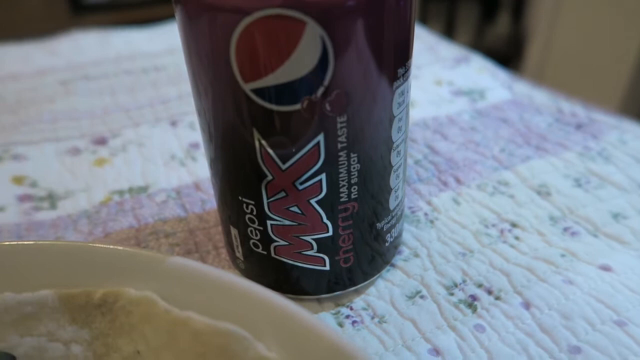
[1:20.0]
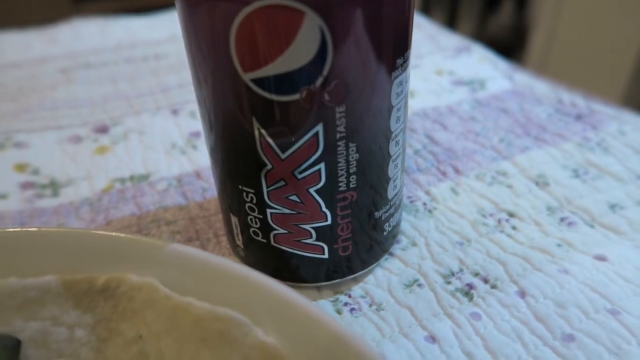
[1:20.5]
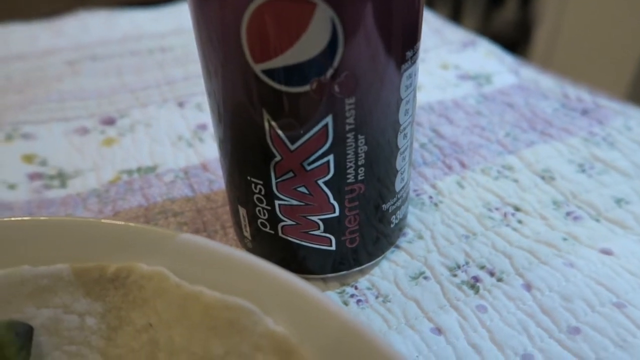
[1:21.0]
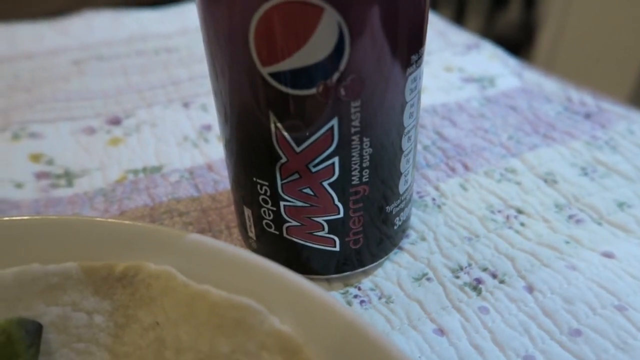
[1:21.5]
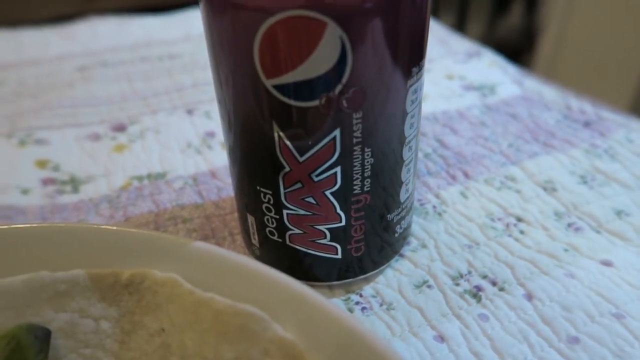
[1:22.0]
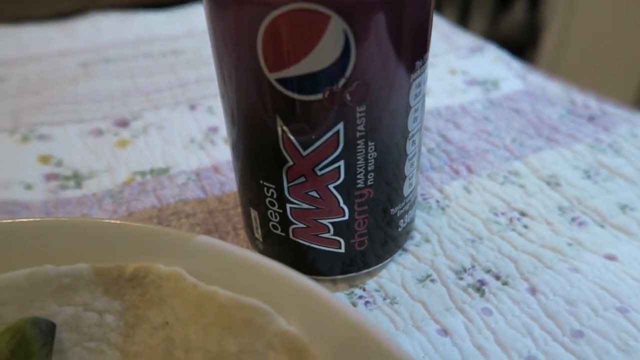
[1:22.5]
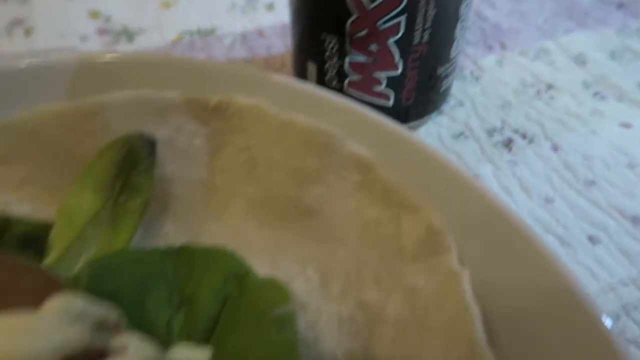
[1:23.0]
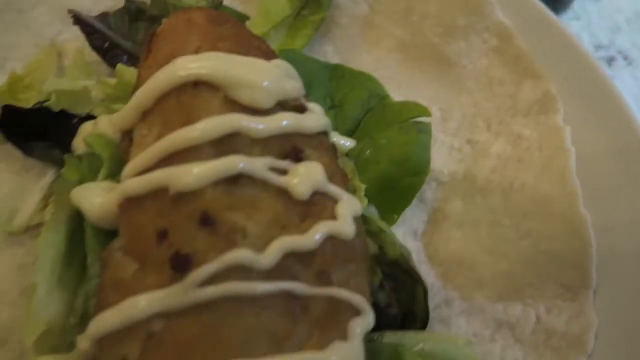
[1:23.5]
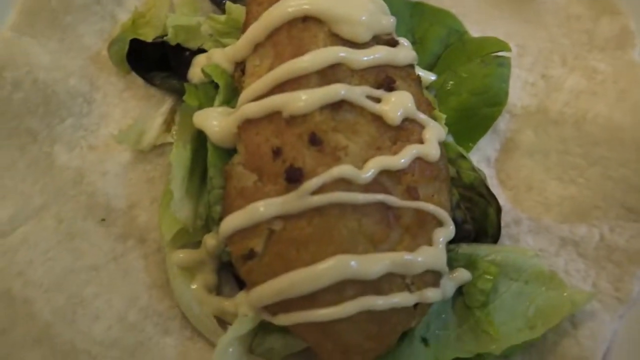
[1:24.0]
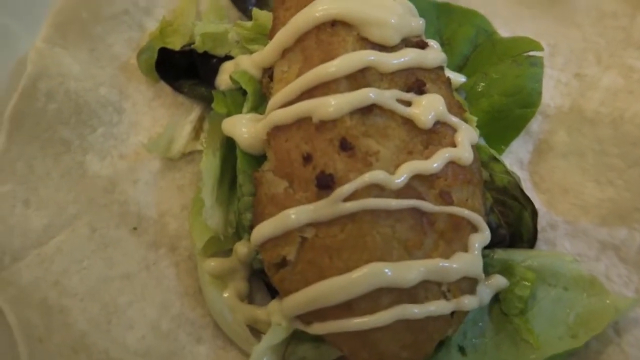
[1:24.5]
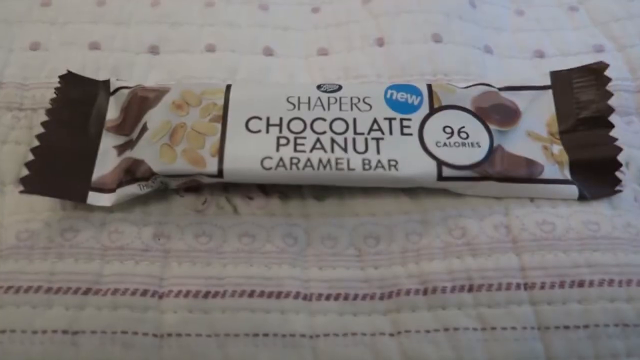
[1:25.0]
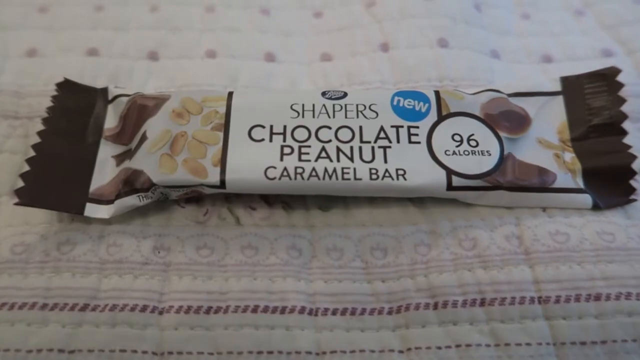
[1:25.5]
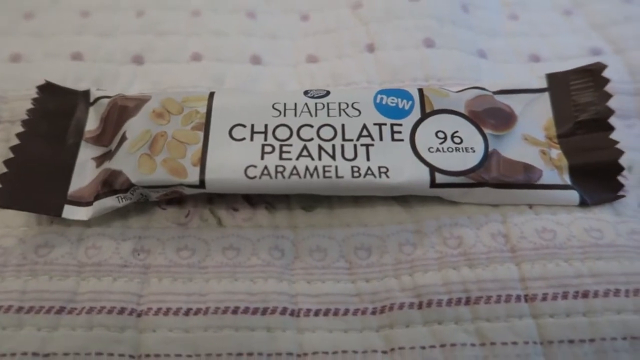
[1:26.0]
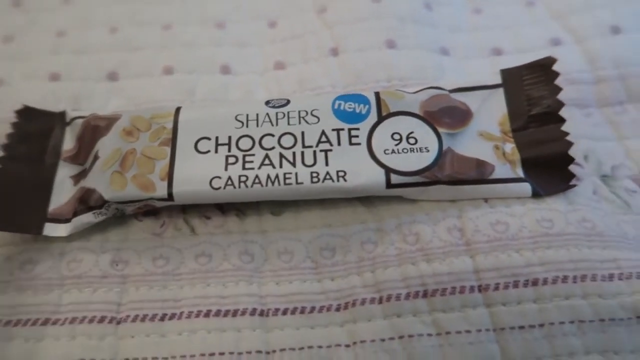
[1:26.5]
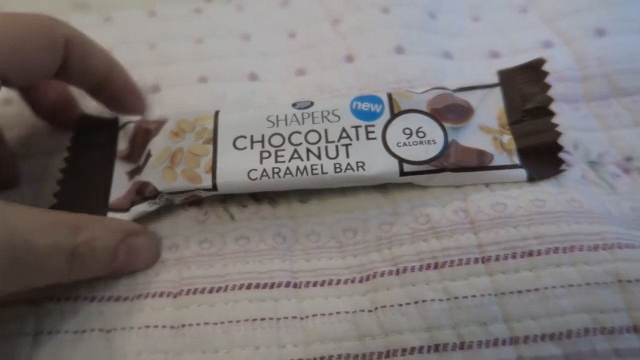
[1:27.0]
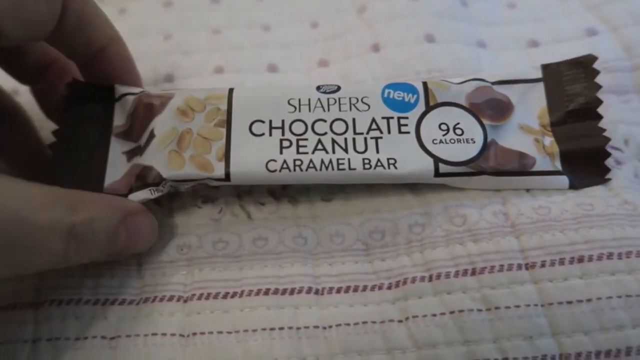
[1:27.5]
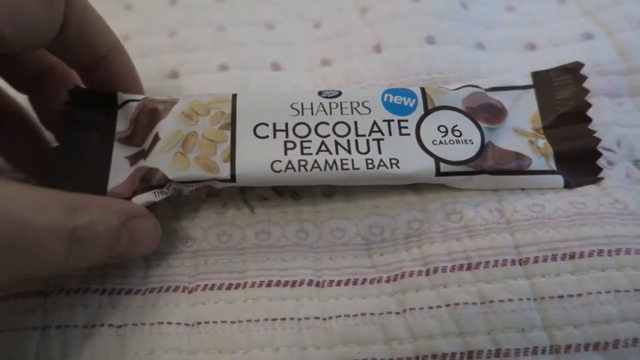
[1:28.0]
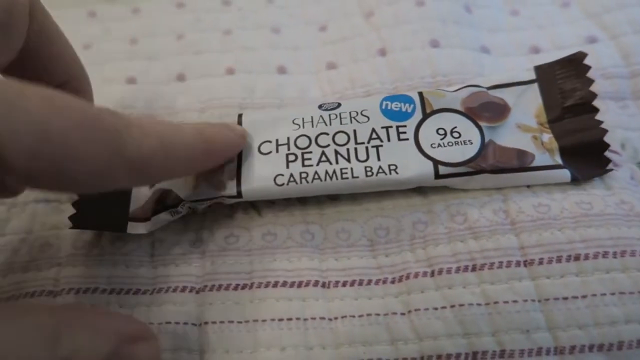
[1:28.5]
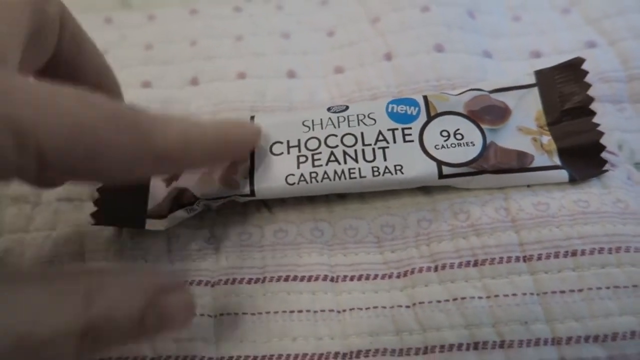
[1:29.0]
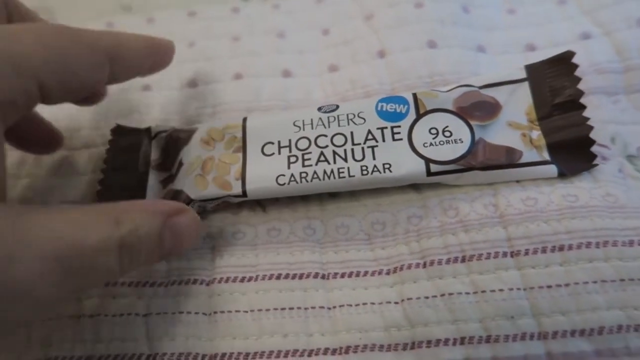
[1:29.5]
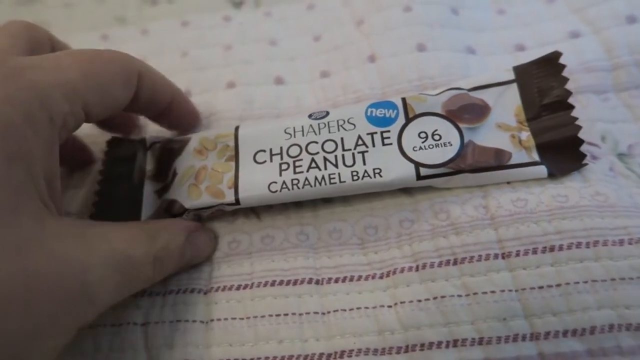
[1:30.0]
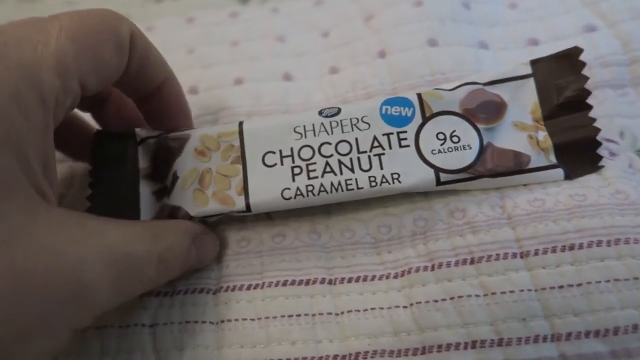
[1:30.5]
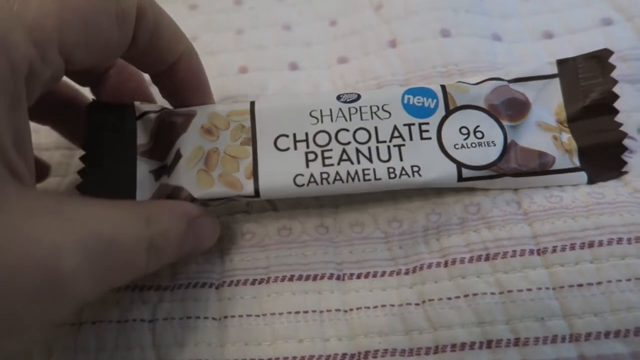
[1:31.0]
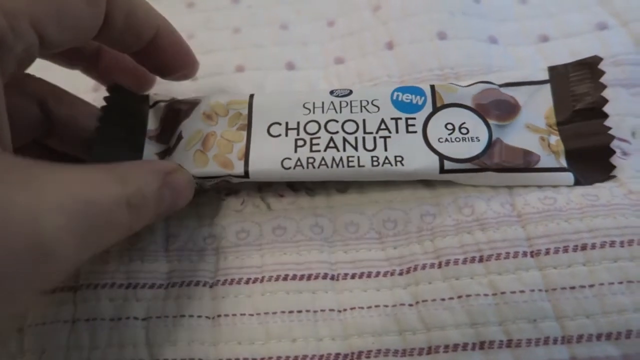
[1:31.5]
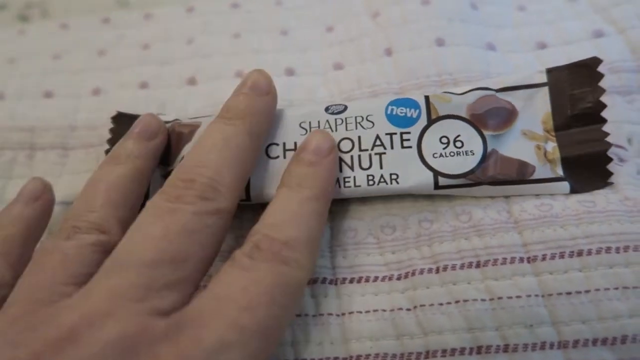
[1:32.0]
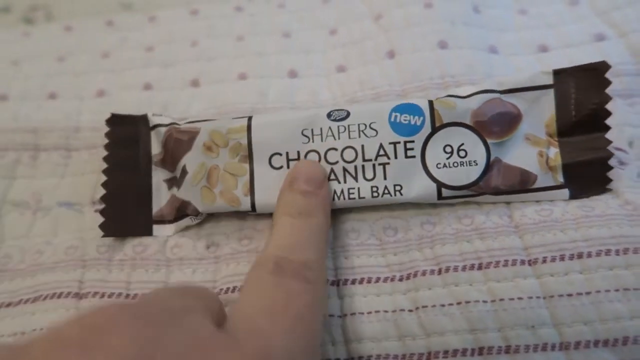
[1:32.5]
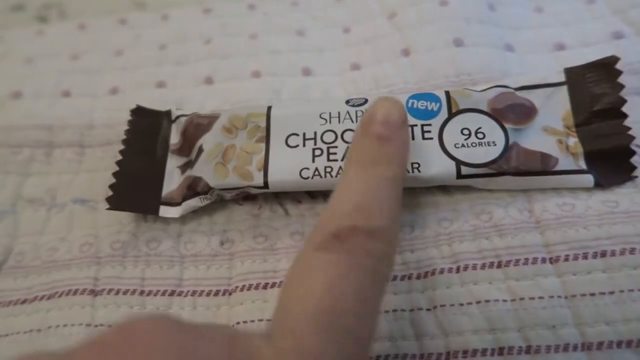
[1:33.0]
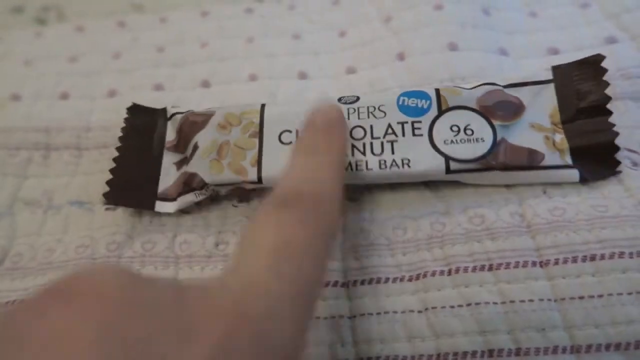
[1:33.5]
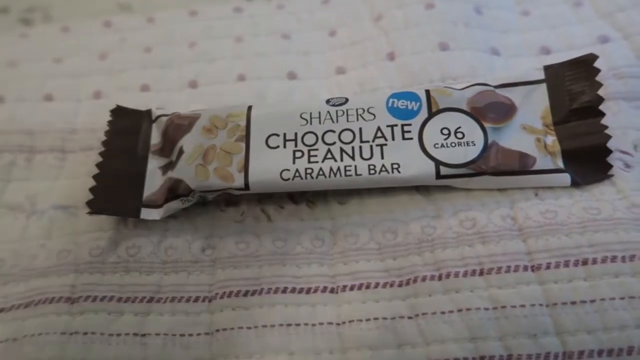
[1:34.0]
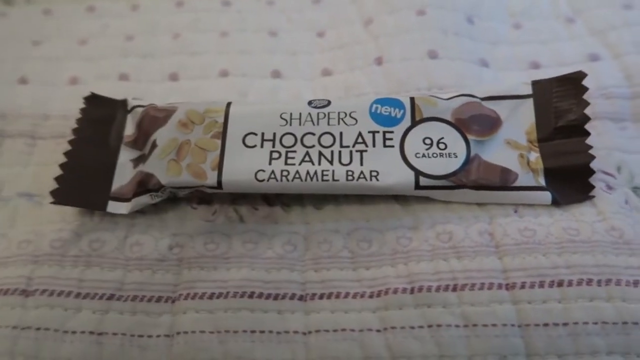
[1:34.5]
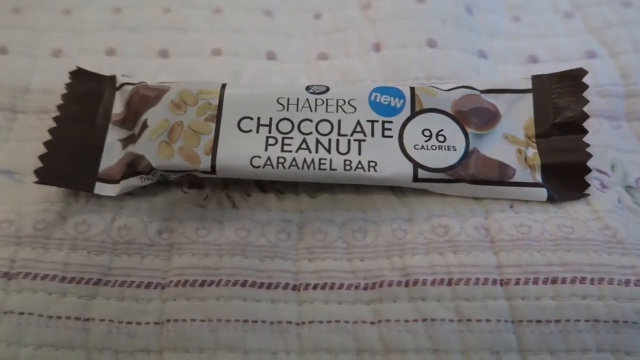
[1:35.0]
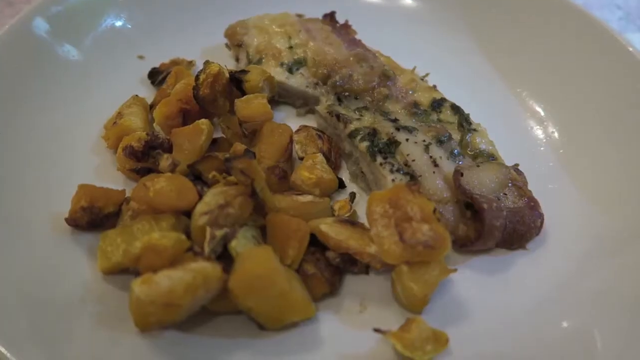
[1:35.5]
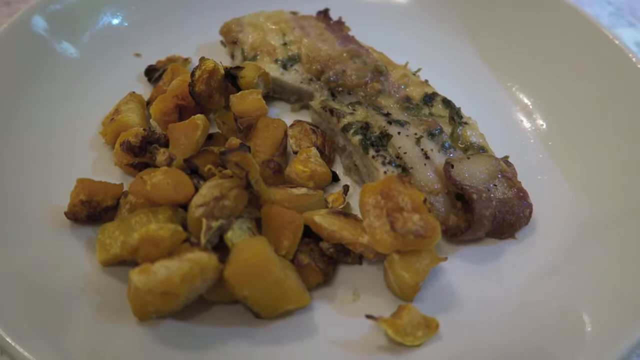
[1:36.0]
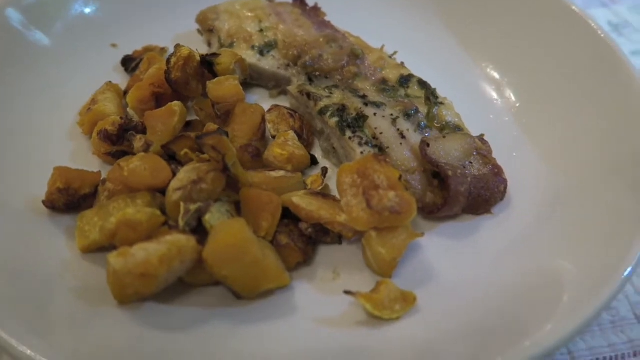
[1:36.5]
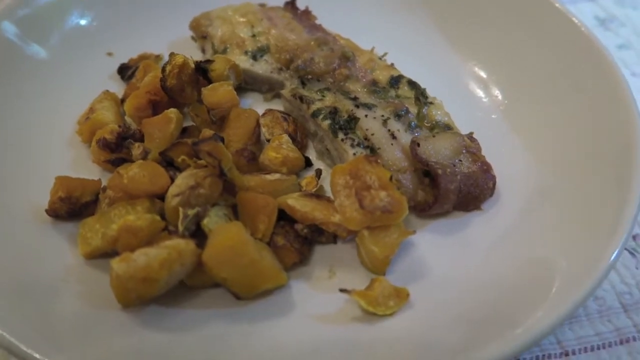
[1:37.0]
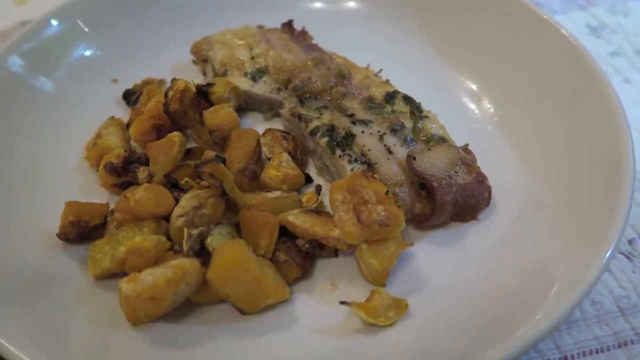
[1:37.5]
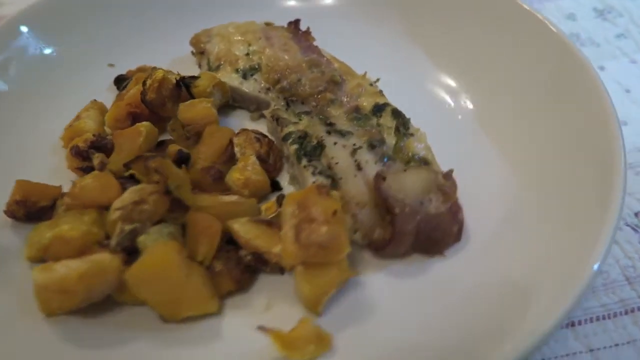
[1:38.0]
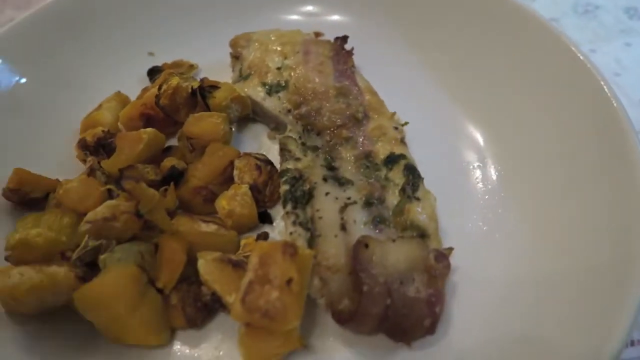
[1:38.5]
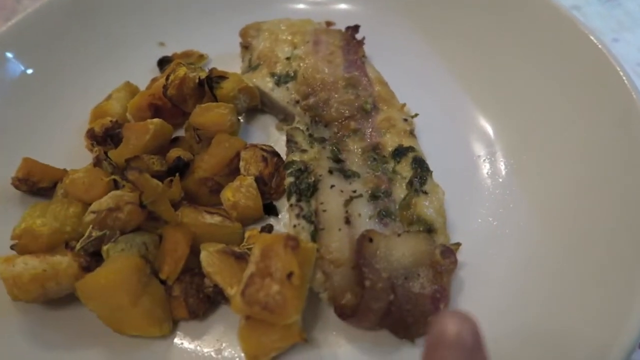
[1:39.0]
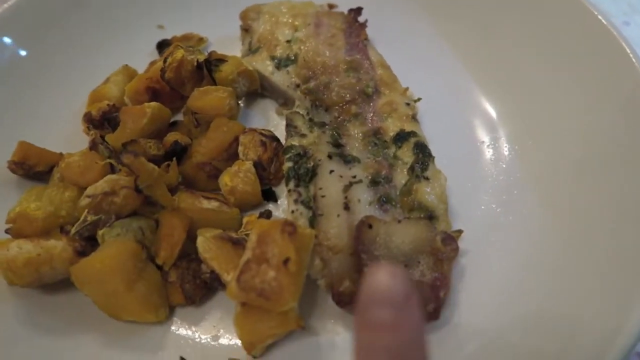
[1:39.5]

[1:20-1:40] A can of drink is shown with writing reading "maximum taste" and "no sugar"; it is a cherry flavor. It is put at the side of the chicken breast, which has lettuce underneath. Next, a chocolate is shown, a Shapers chocolate peanut with caramel bar marked as new, showing 96 calories on the small chocolate. The person explaining it leaves the packet and shows the calories. Then another plate appears with butternut and bacon fried with spinach, along with some vegetables.